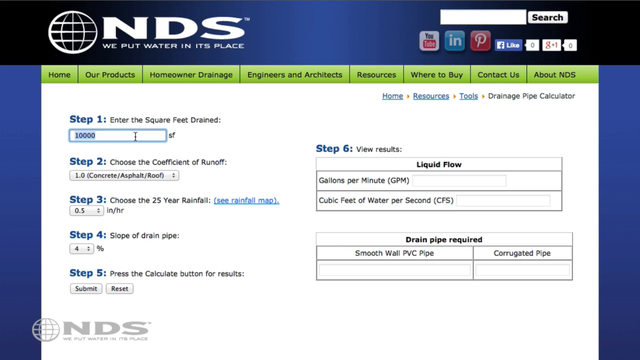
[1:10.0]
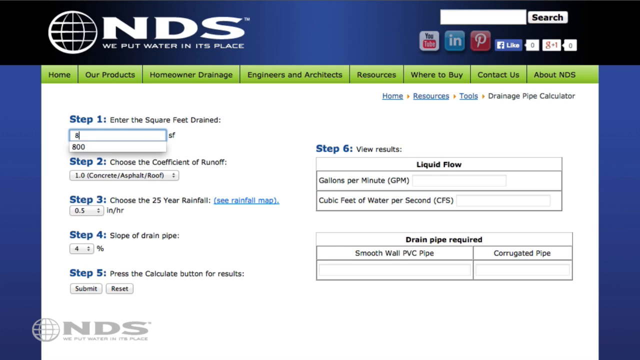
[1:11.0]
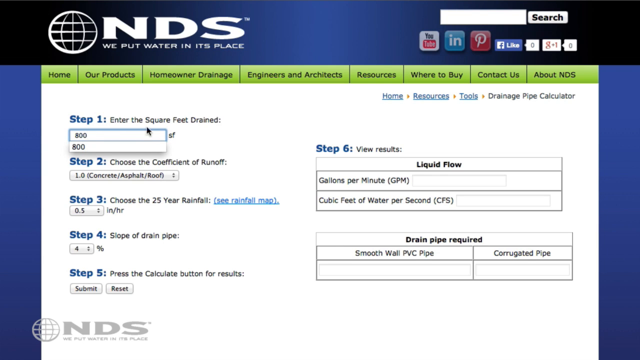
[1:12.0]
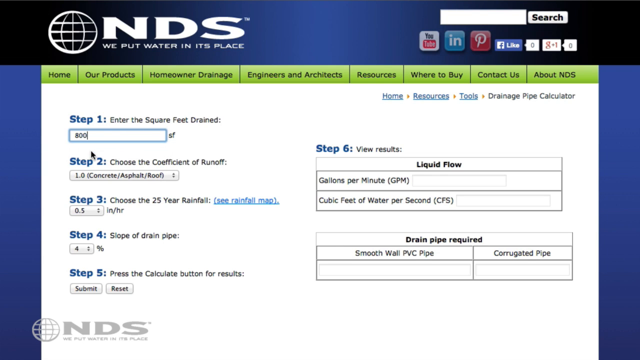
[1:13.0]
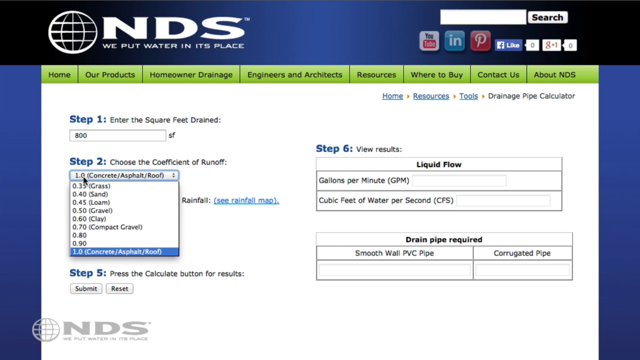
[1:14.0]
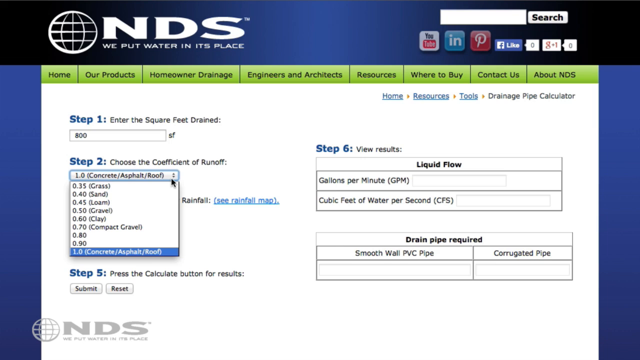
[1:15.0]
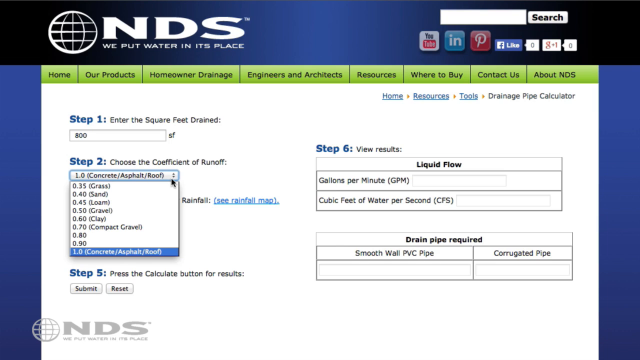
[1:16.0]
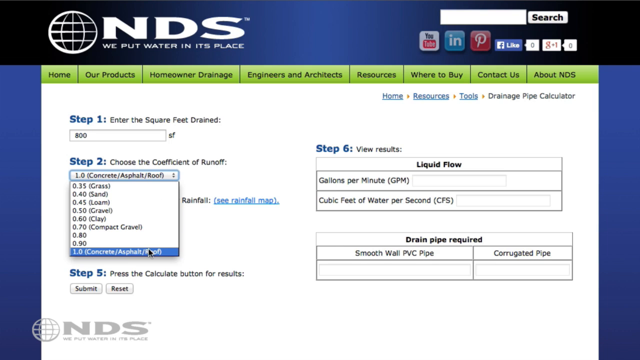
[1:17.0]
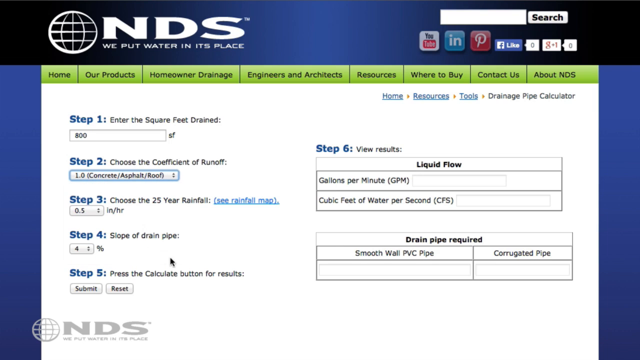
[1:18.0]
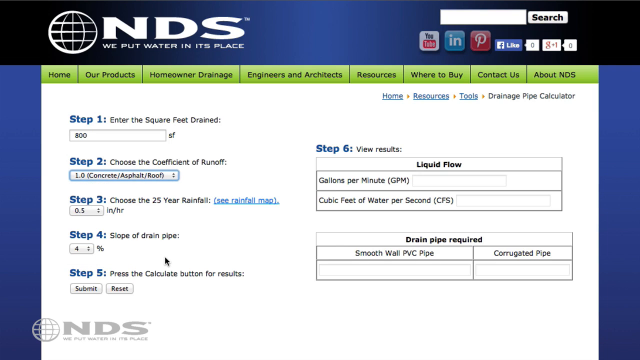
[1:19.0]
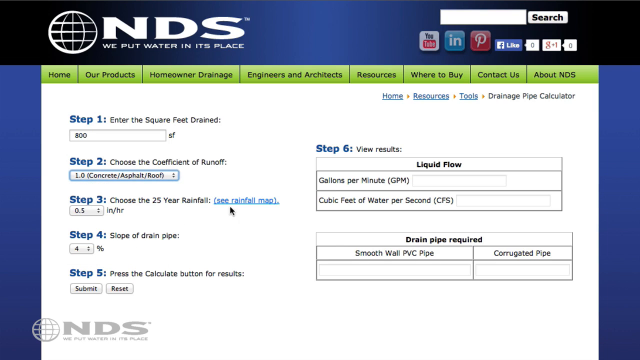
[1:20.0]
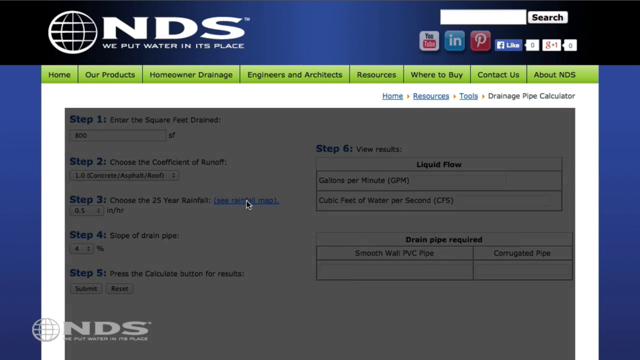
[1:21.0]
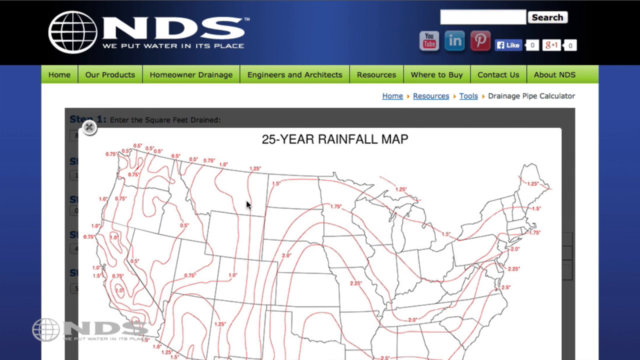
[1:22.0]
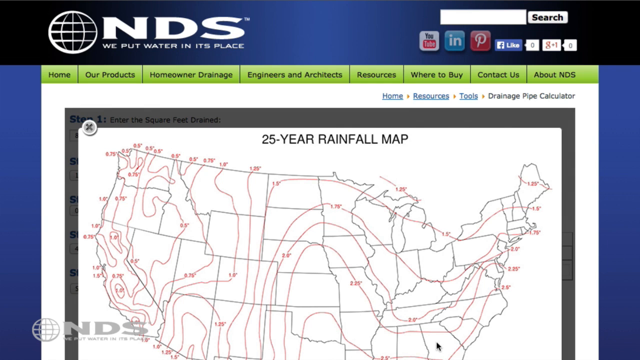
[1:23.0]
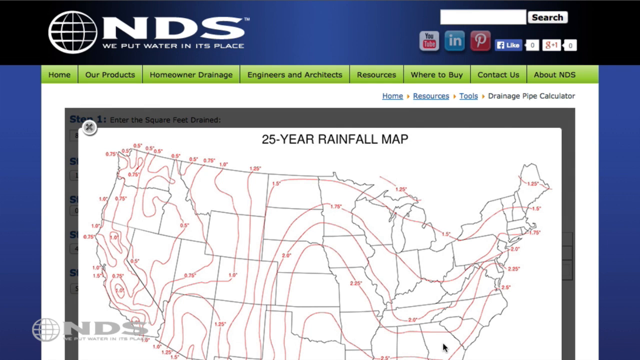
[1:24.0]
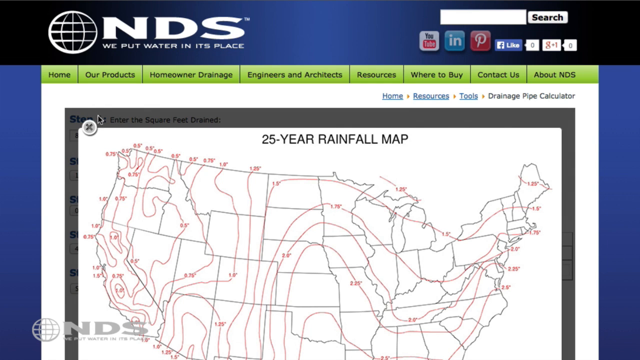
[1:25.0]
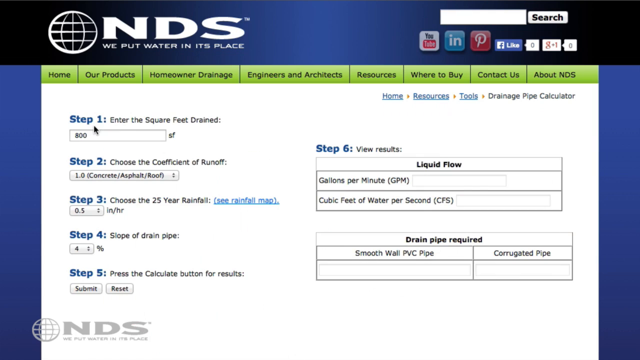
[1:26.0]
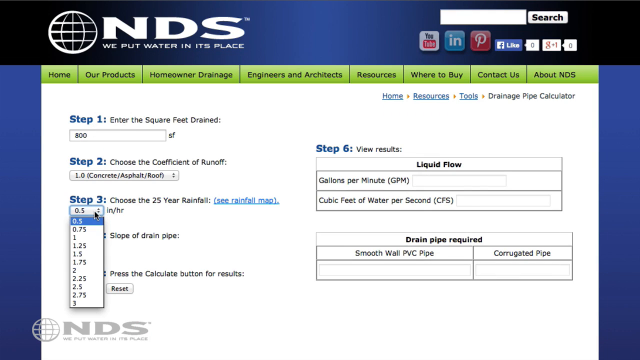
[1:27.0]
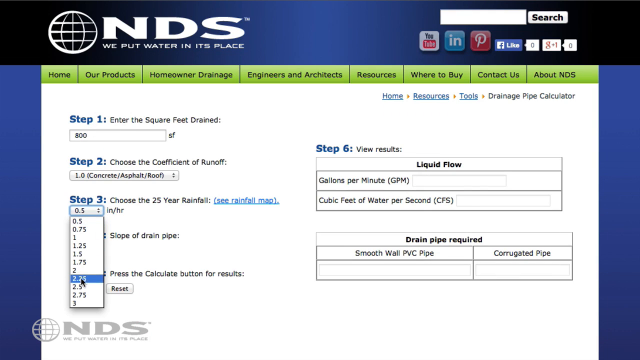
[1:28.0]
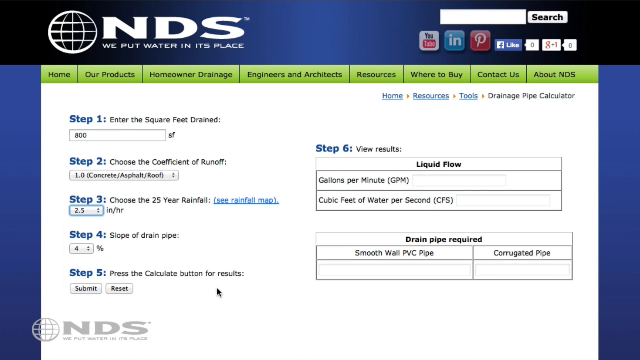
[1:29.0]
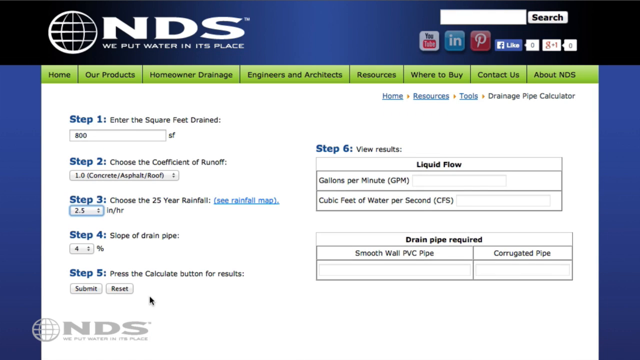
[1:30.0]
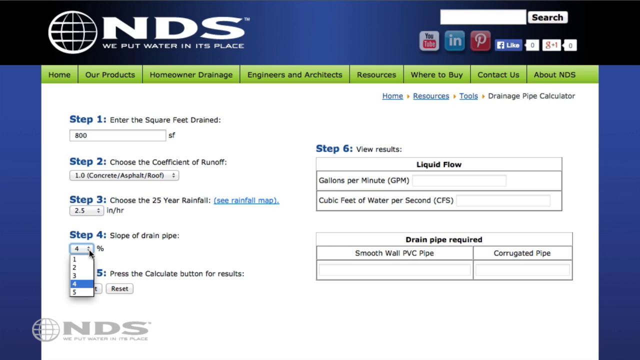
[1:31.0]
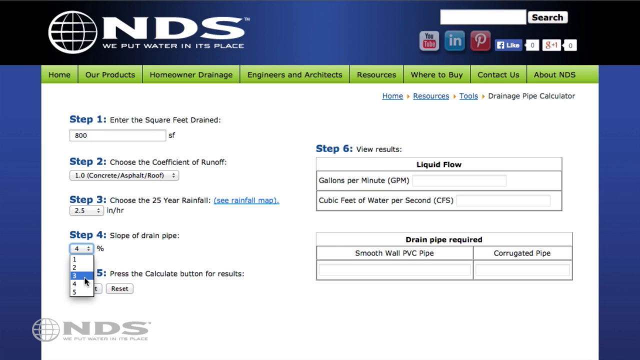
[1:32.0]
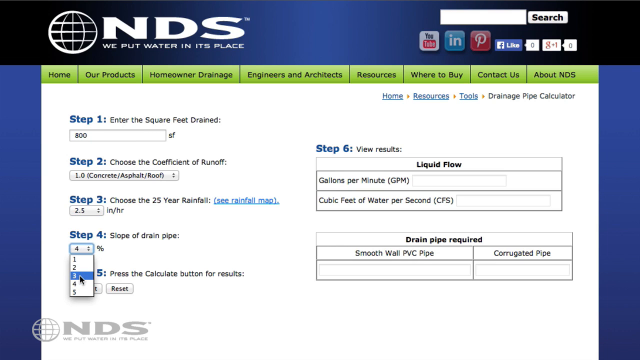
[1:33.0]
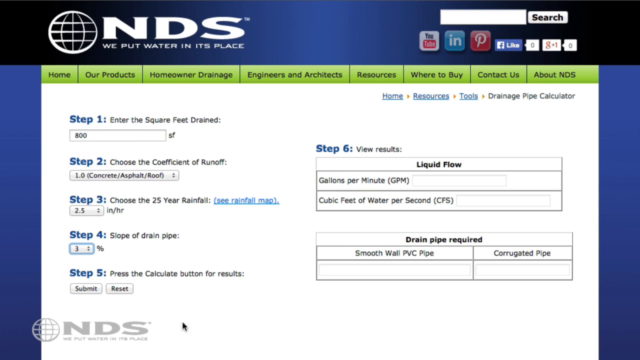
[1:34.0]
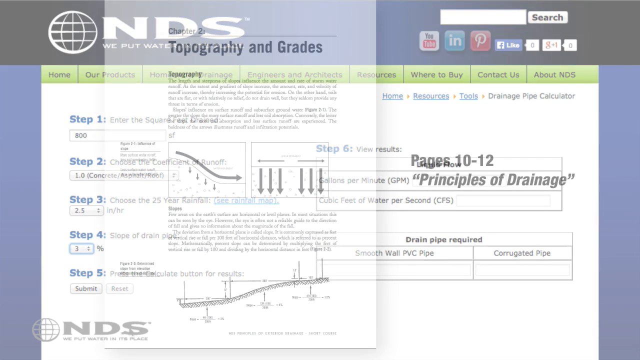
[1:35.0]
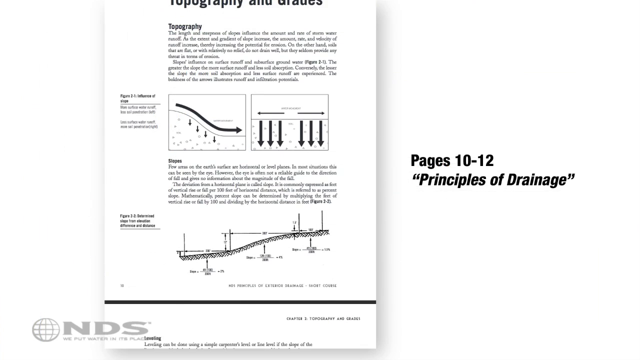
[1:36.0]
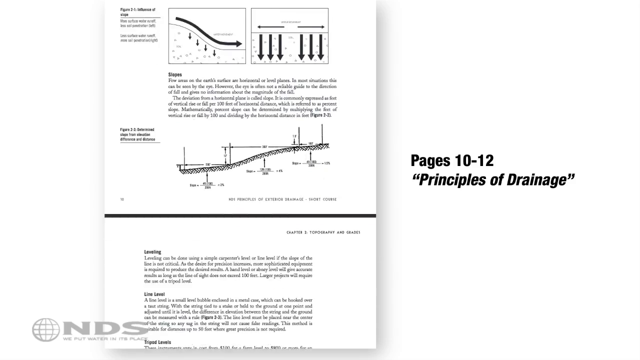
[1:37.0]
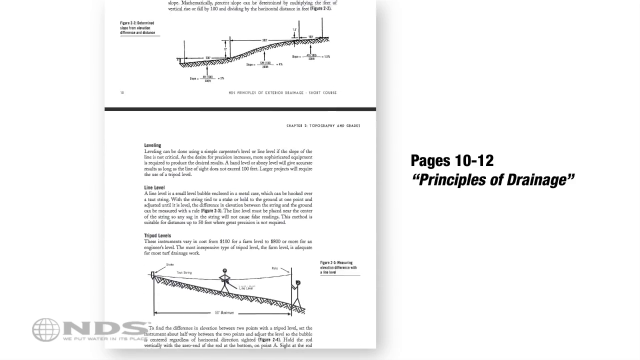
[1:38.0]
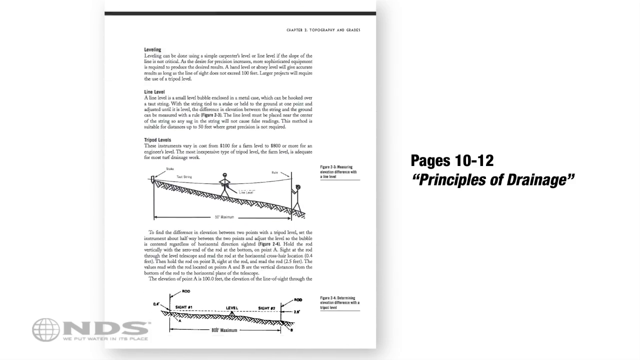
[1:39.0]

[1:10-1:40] The website page with the field boxes is shown. At step 1, the cursor types something into the field. At step 2, it pulls down a drop-down and makes a selection. At step 3, the cursor goes to a blue hyperlink to the right of the question, which opens within the website a map of the United States headed "25-Year Rainfall Map", with different areas of the country outlined with their 25-year rainfall averages. The cursor moves into the southeast, somewhere near Georgia, points, then closes the page, returns to the form, opens the step 3 drop-down and makes a selection. At step 4, it opens the drop-down and selects number 3. The video then shows what appear to be pages 10 to 12 of the website on principles of drainage, scrolling through pages with drawings of angles, presumably about calculating the slope of these angles for drainage.